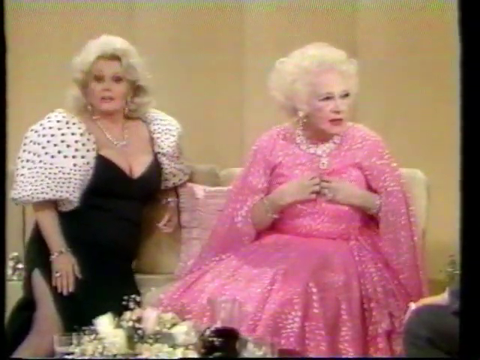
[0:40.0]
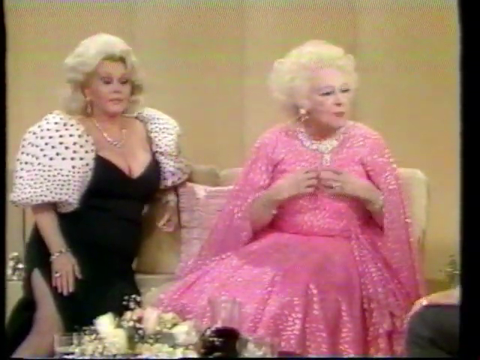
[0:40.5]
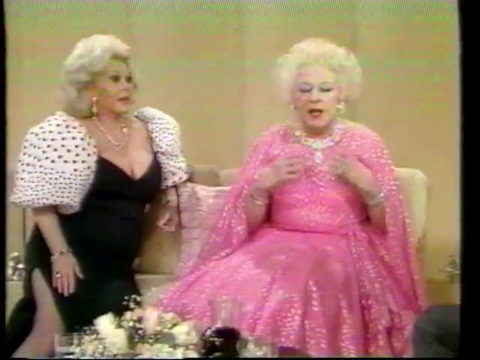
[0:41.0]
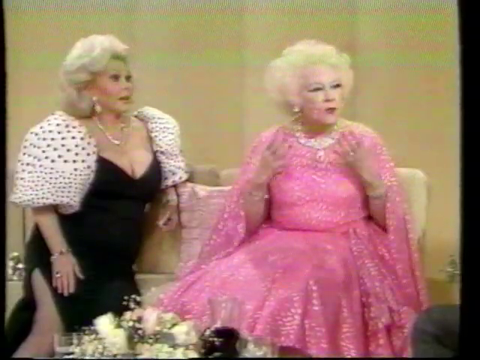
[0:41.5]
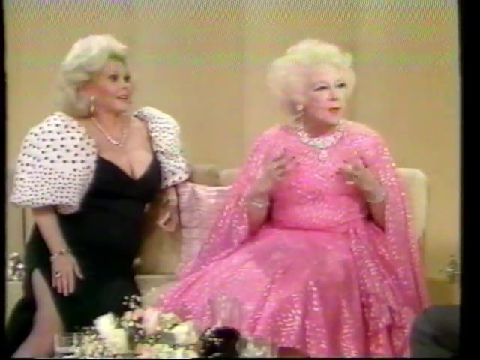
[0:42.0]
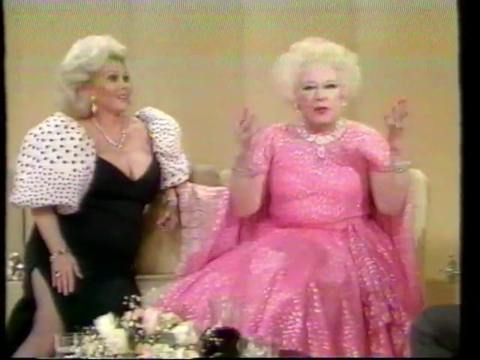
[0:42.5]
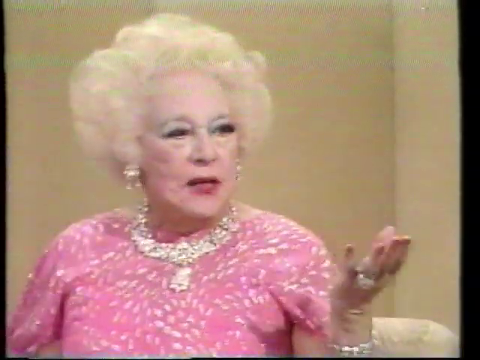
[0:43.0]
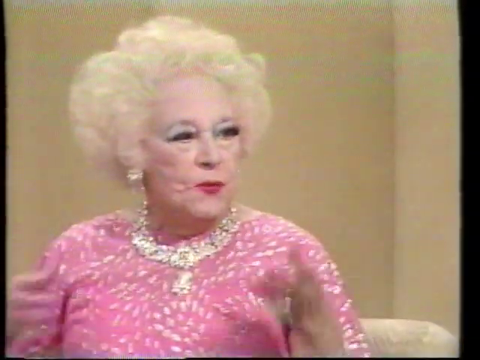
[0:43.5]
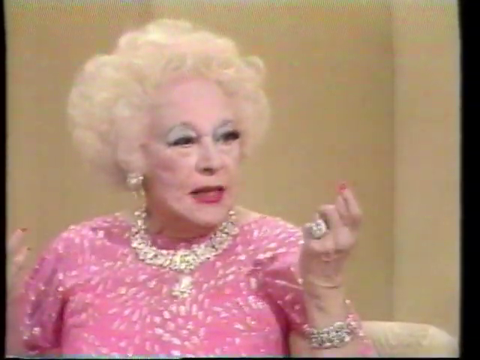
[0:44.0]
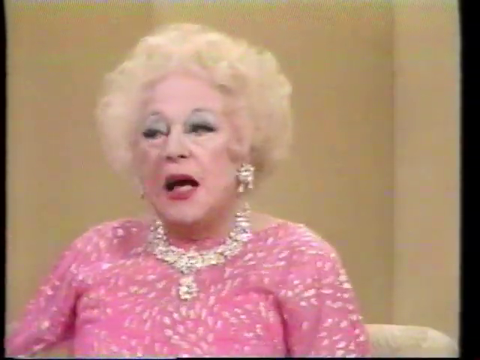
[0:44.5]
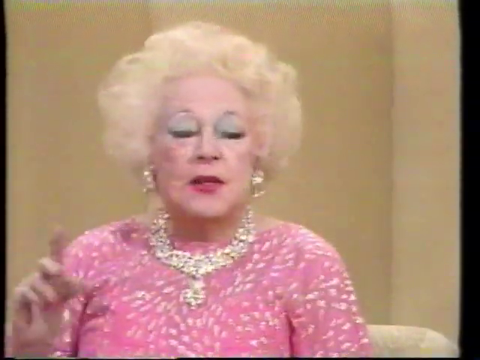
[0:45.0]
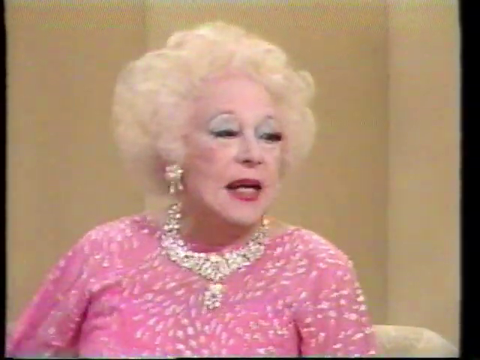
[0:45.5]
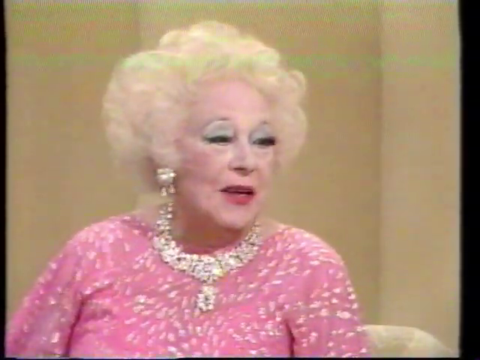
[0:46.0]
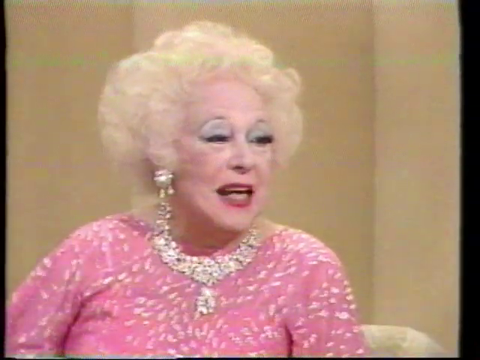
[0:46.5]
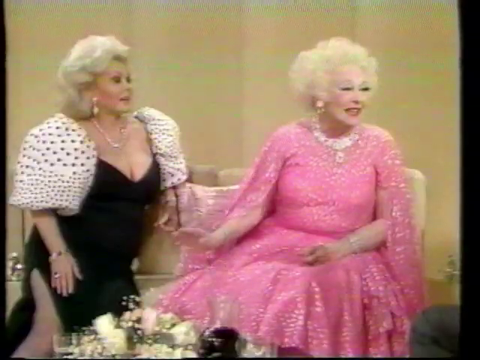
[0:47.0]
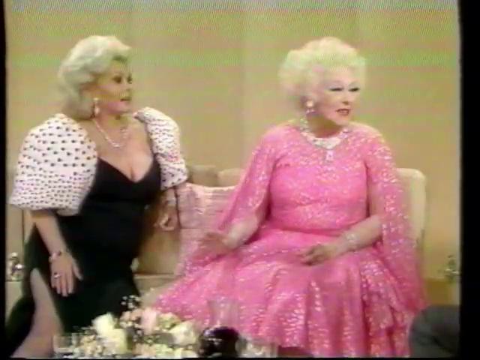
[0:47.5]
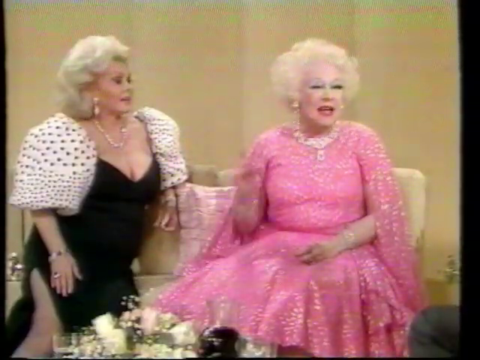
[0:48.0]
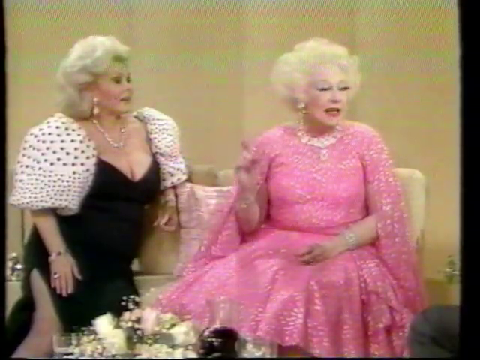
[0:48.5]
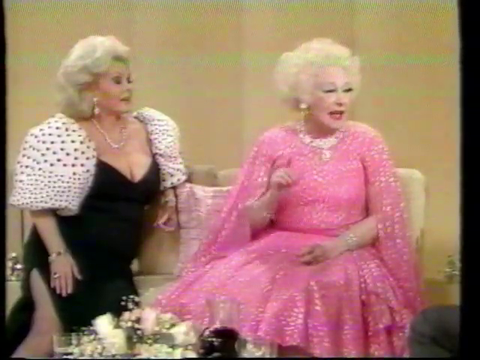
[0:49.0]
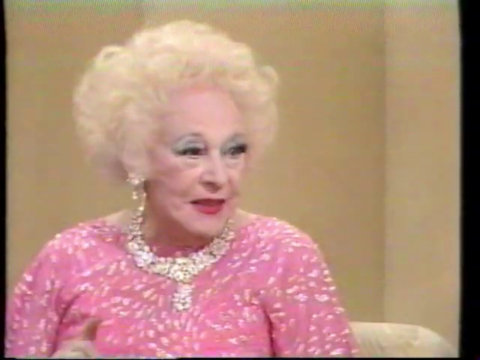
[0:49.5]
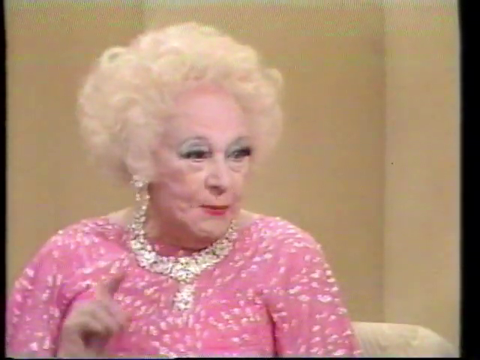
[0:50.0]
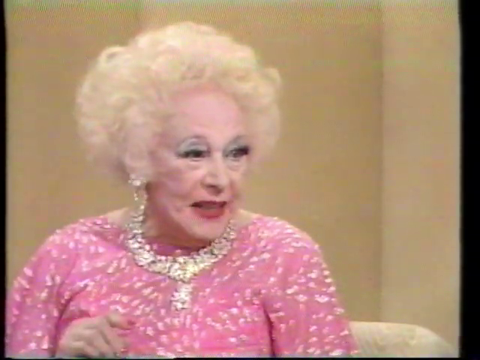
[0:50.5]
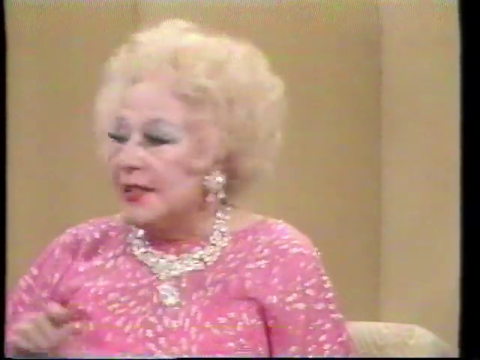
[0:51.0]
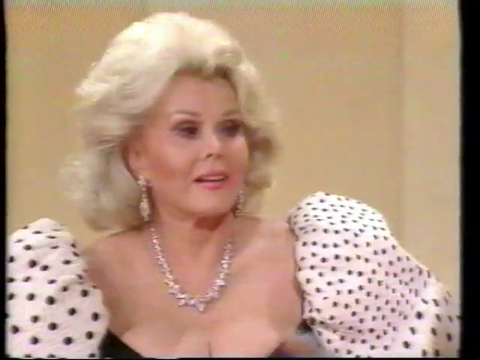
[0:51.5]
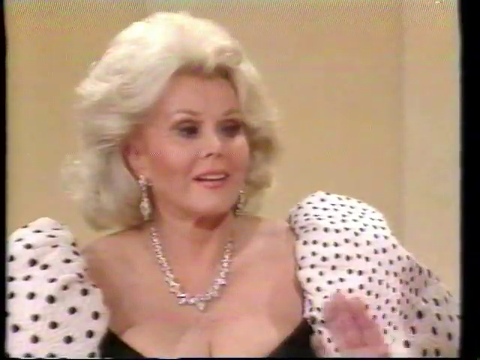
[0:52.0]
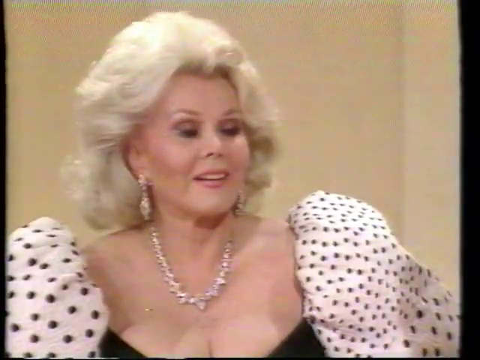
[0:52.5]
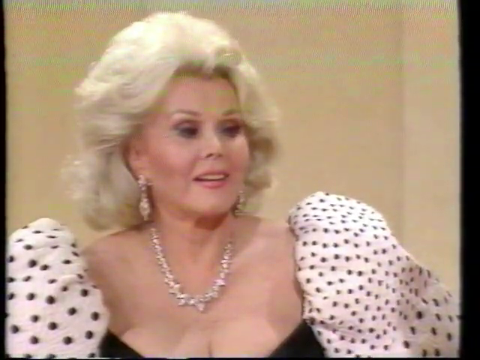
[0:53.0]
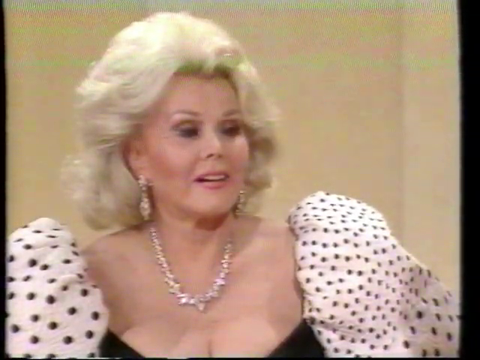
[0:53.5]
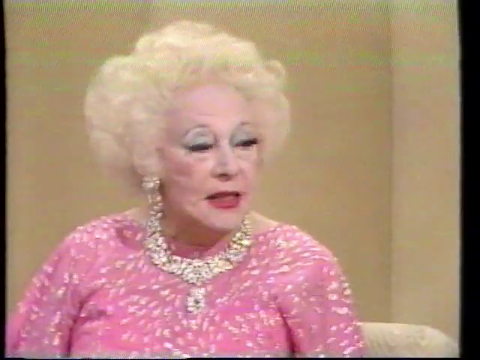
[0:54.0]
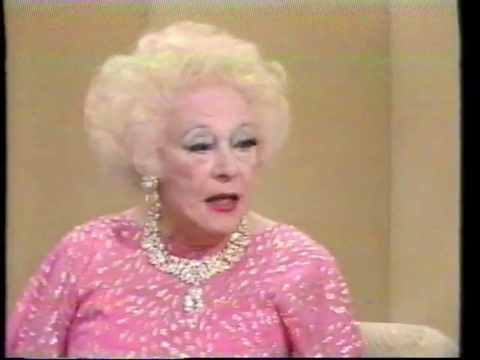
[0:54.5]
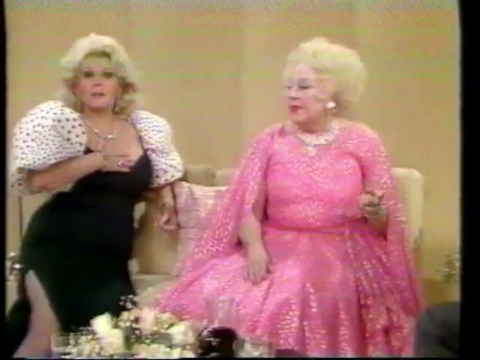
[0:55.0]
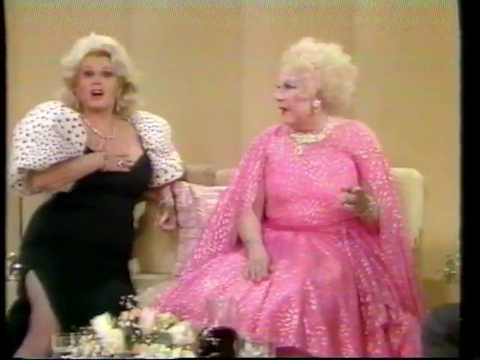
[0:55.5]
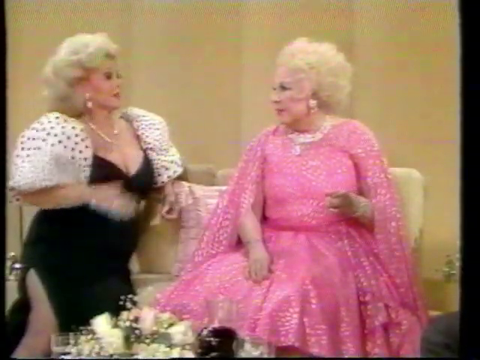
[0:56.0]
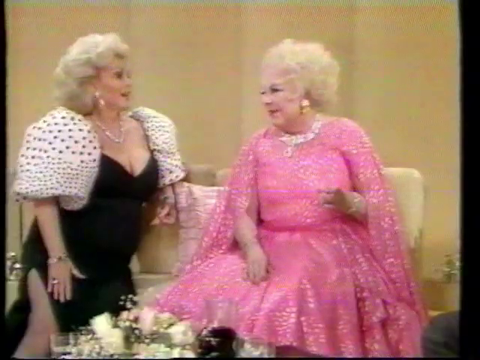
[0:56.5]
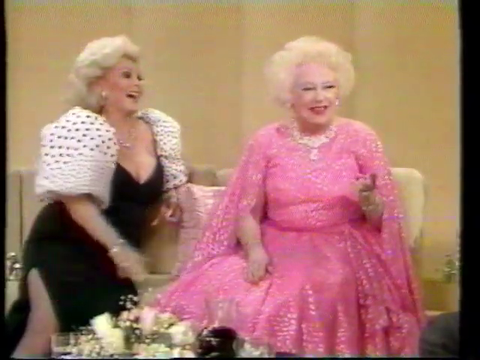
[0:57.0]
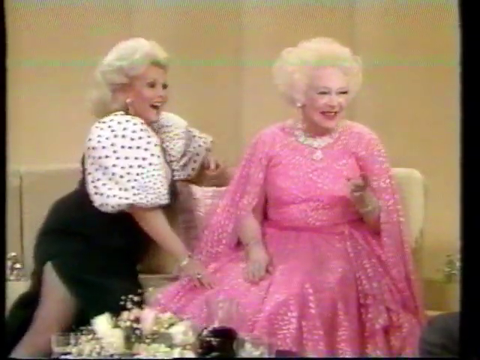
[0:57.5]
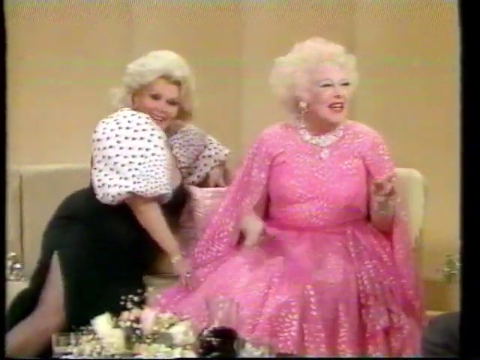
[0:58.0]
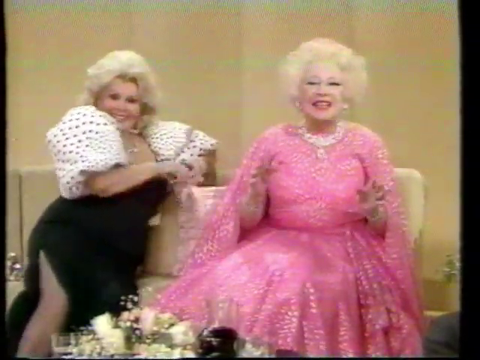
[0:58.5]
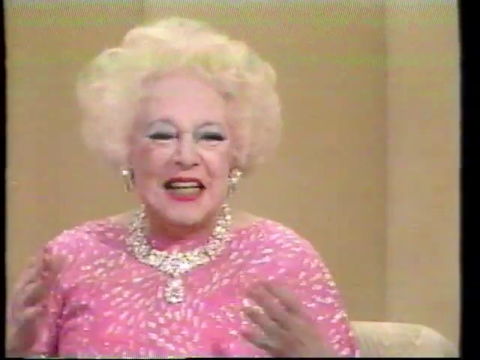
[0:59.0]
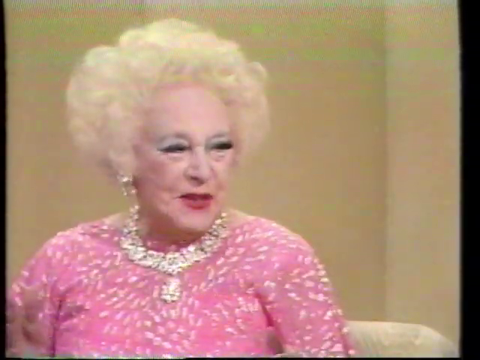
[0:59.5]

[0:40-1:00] The two women continue speaking, with the woman in pink mainly speaking now. The camera is zoomed in on her face and upper body as she makes twirling motions with both hands. Her diamond necklace has a very large diamond pendant that twirls and shakes as she moves, and she looks towards the right side of the screen, where the male presenter is sitting. The camera pans to the left side, showing the polka dot woman staring off towards the right side of the screen with a blank expression, saying nothing. A zoomed-out shot of both women follows, in which the woman on the right, in the polka dot outfit, moves slightly, getting up from a kneeled position on the sofa, bending over slightly and readjusting, then sitting back down on the sofa with her right hand on her right thigh, on the black dress fabric. The camera zooms in on the woman in pink once again.